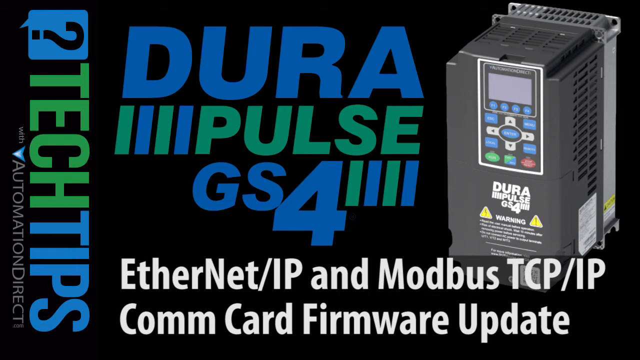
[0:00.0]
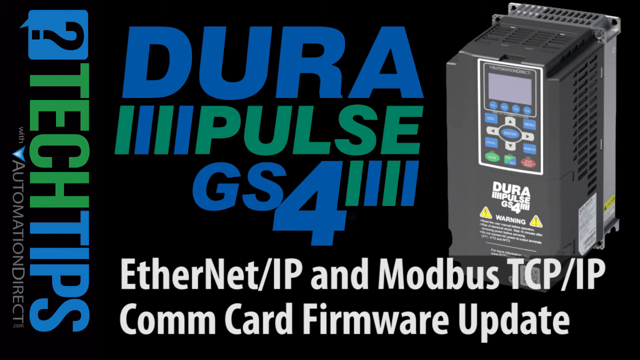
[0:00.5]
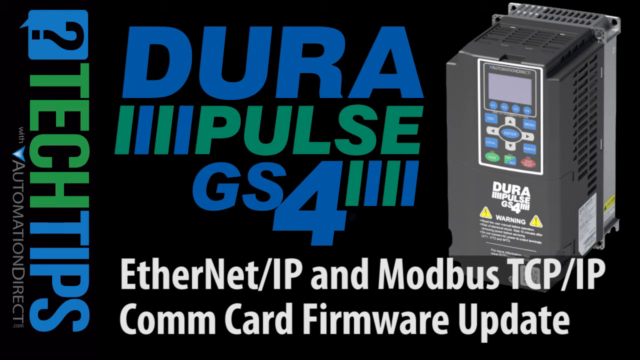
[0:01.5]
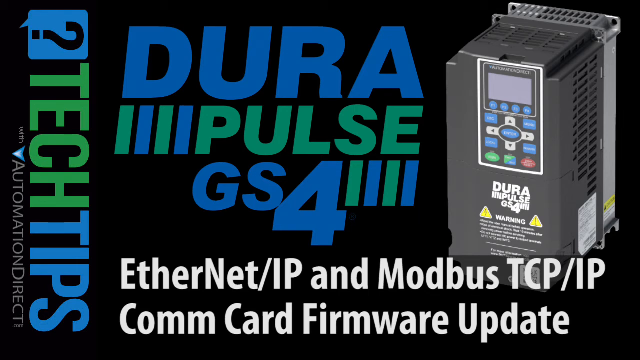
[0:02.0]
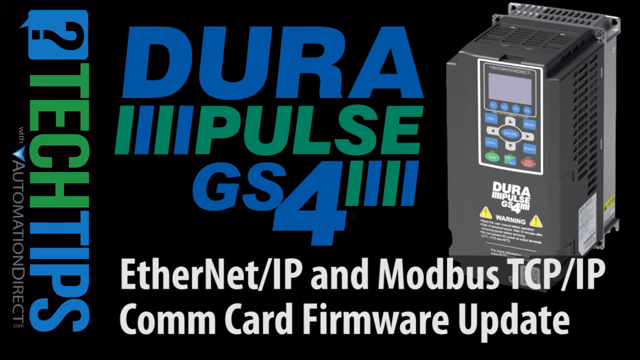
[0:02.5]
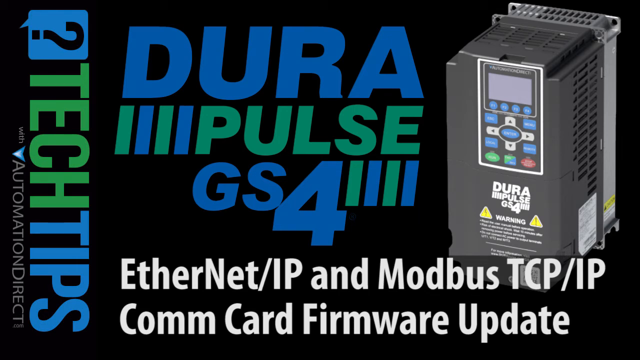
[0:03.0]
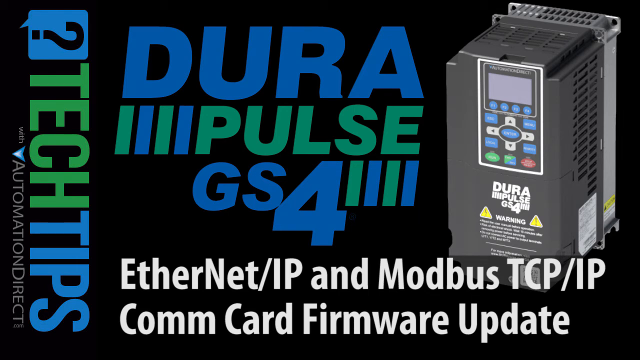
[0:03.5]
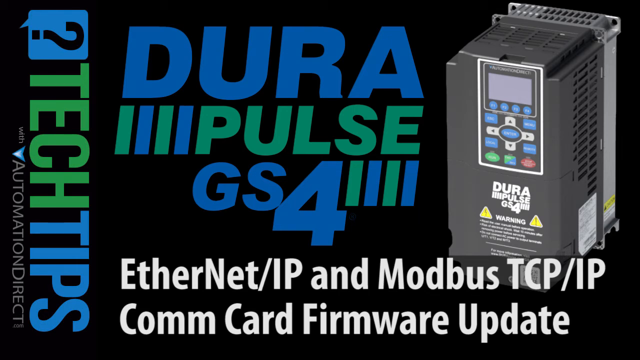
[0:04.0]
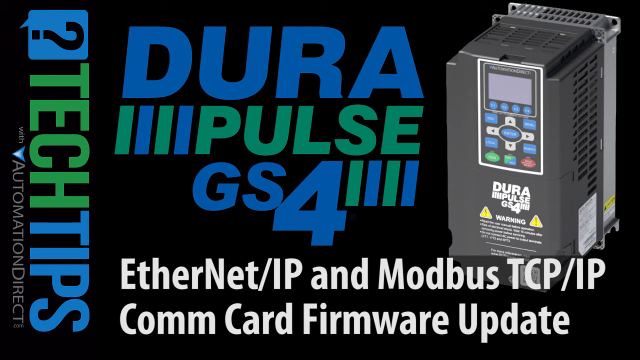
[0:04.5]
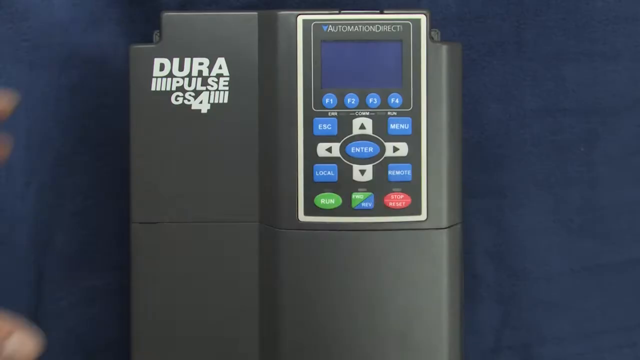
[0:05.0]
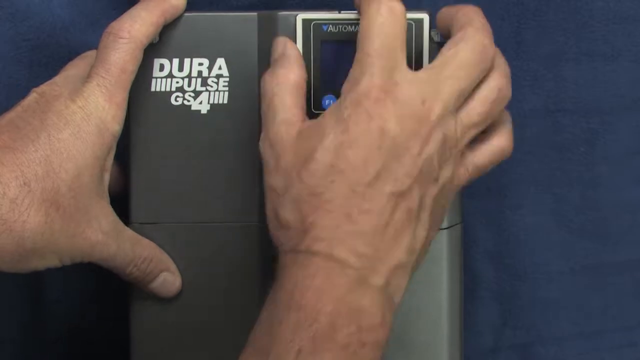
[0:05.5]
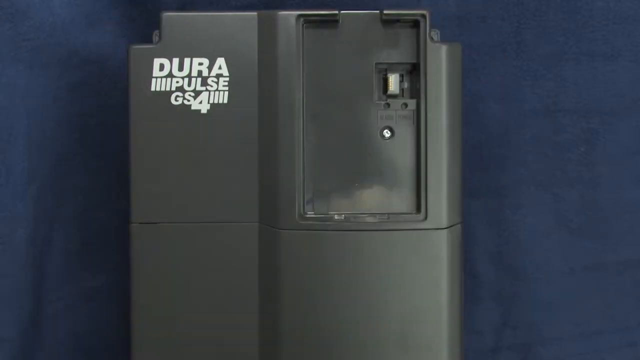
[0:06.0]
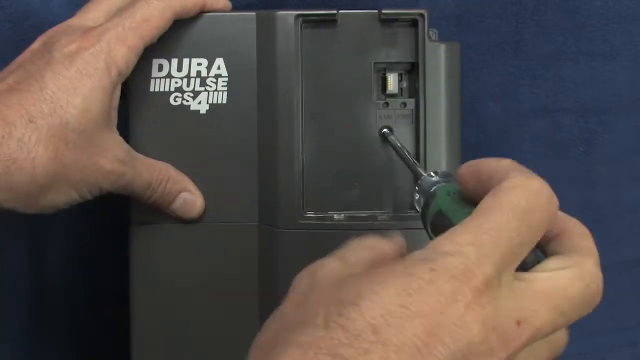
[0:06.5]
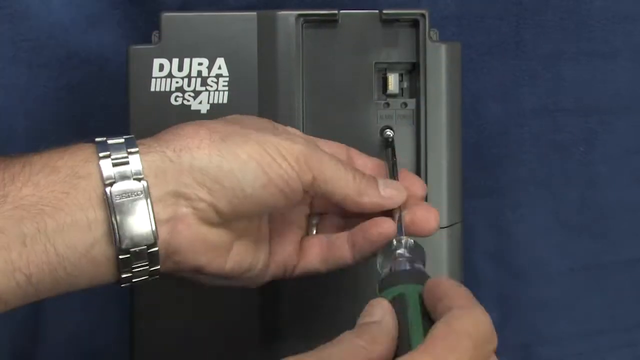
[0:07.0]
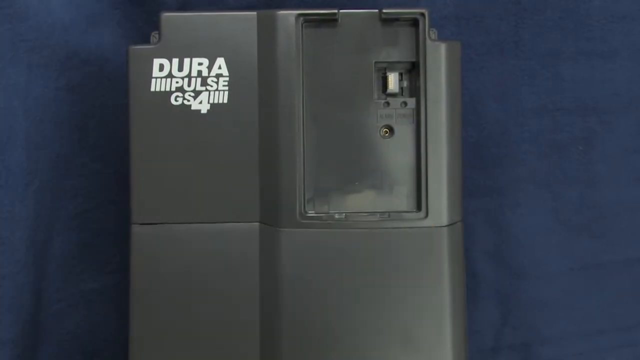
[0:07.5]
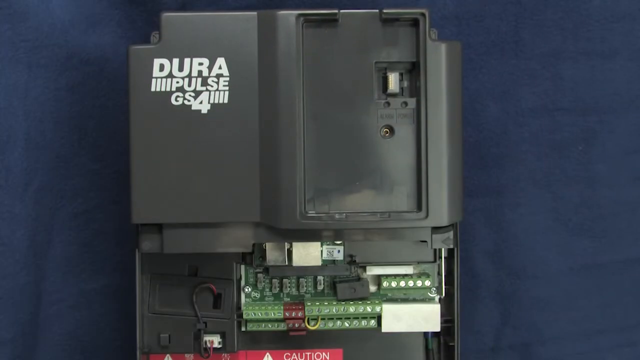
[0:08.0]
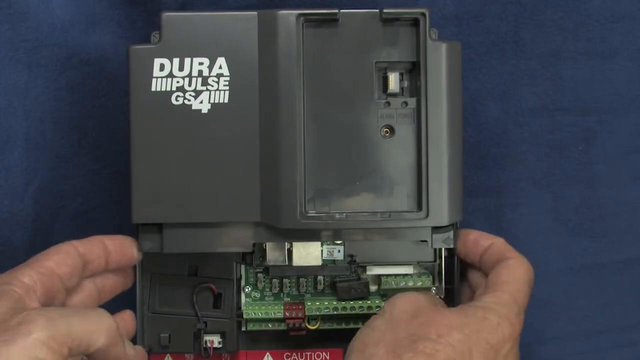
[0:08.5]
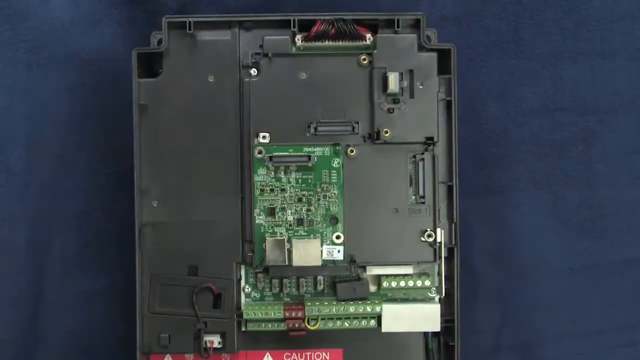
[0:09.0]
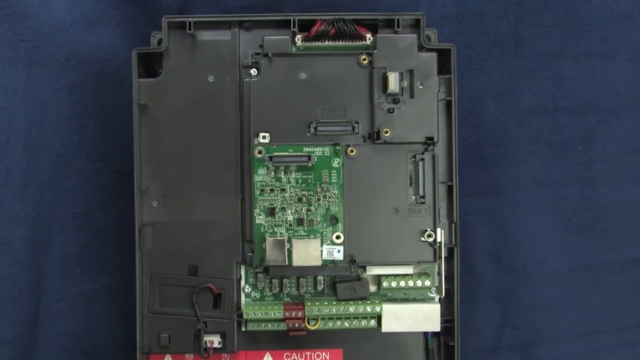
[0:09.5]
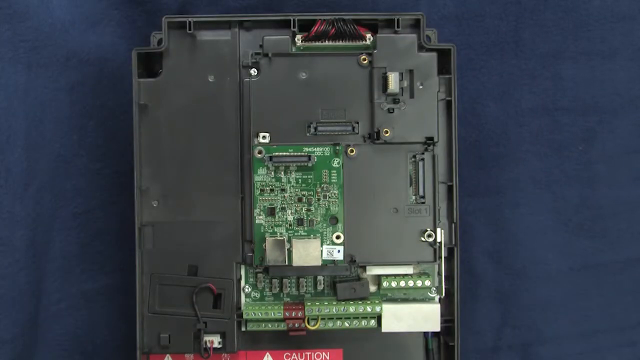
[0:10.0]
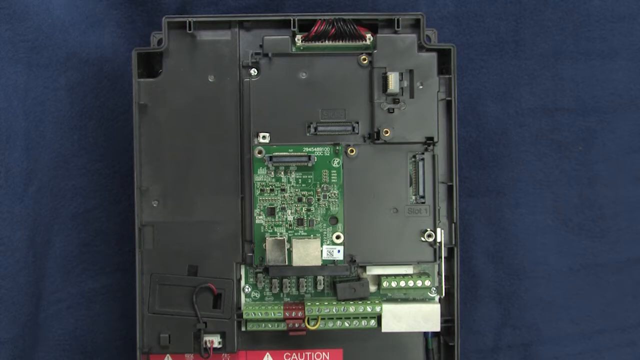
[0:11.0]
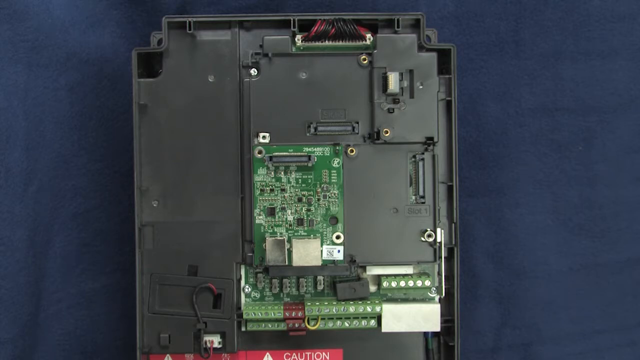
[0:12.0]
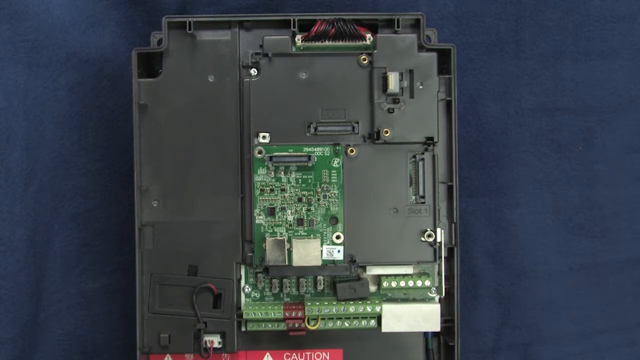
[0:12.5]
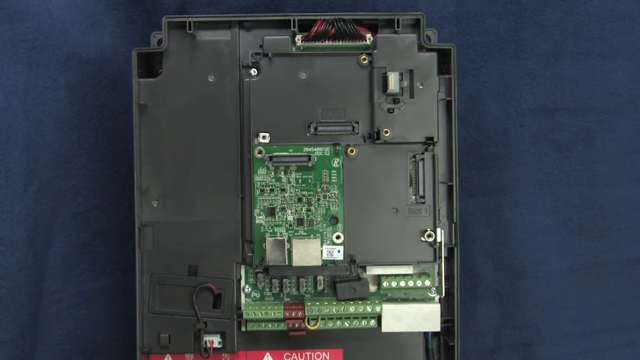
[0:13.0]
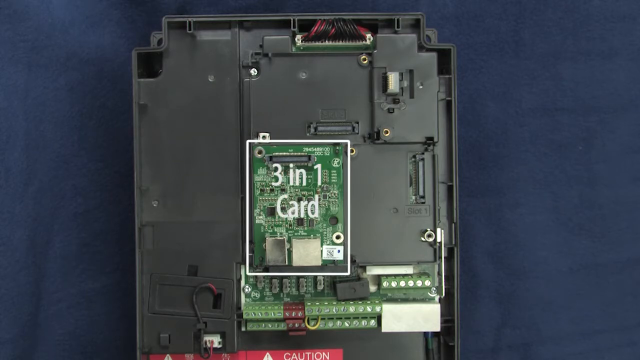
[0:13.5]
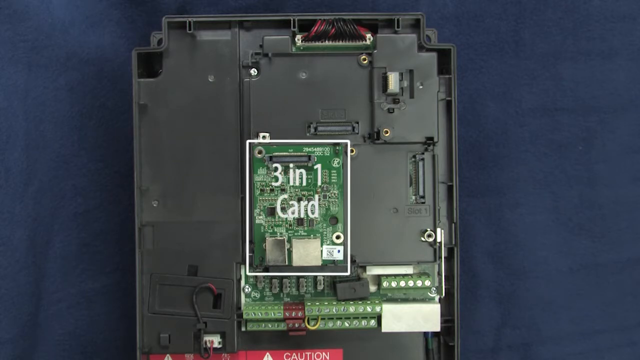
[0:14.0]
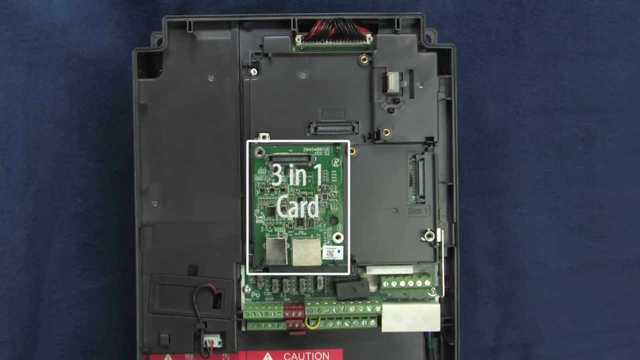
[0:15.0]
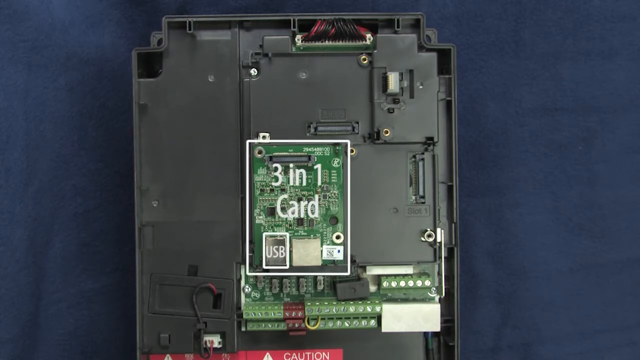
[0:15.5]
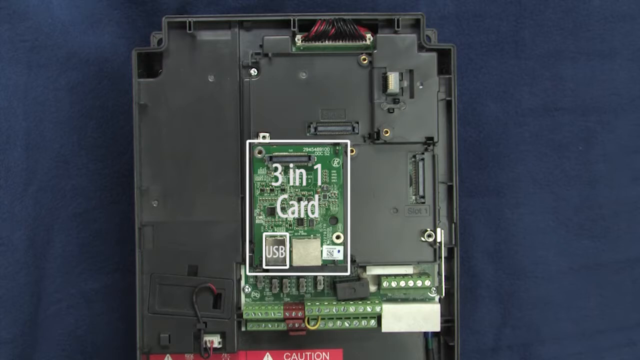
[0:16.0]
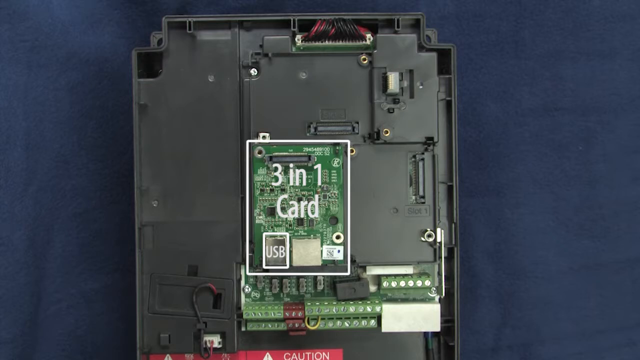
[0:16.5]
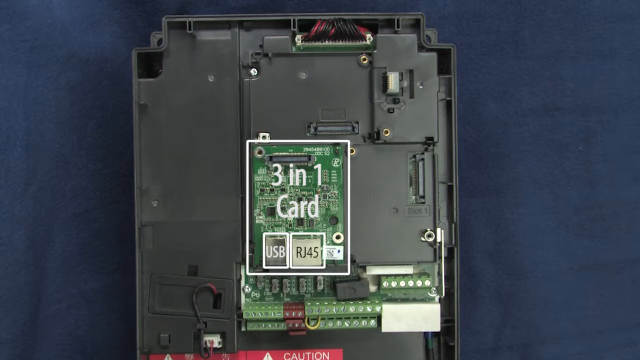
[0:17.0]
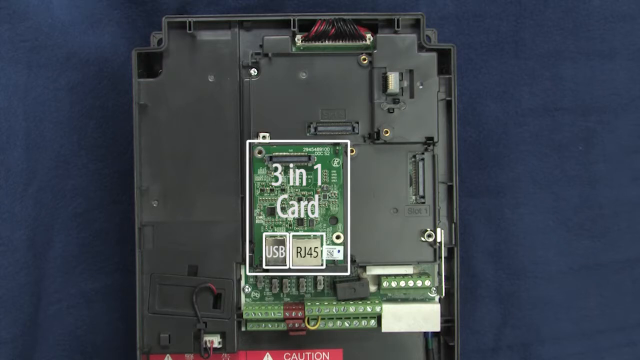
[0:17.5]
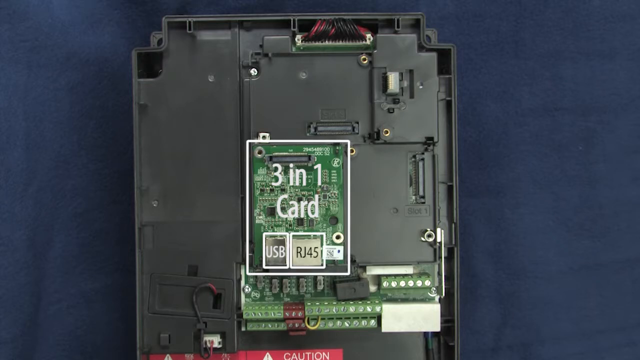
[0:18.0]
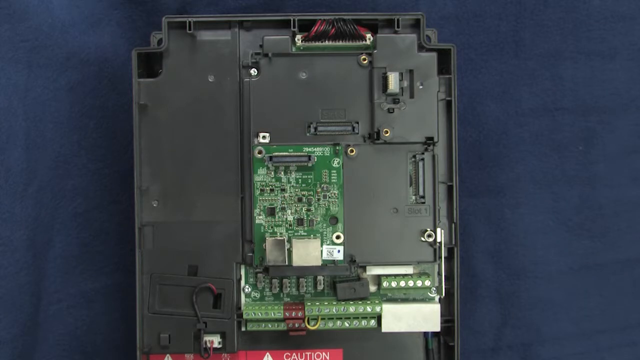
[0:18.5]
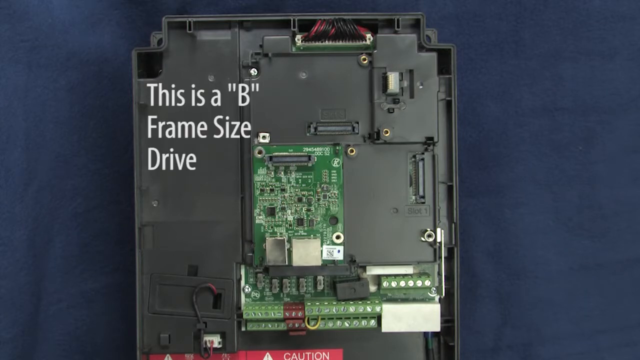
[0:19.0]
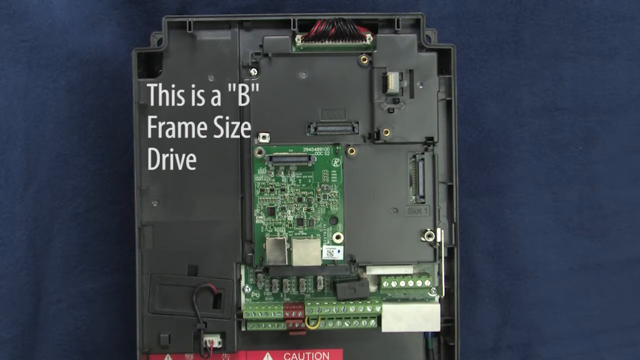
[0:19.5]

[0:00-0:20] On-screen text reads "DuraPulse GS4 Ethernet IP." Someone unscrews the back of a device, opening it up and taking it apart. Inside there is a three-in-one card and a USB, and text reads "RJ 45," "tech tips," and "communication card firmware update." It seems to be a demonstration of how to update the card. Text also says "this is a B frame size drive," so the device looks like a drive for a computer. There is a warning label on it. The DuraPulse GS4 is a combination of blue and a tealish blue. A man wearing a watch opens the back of it, apparently to show how it opens and how the cards inside can be replaced.